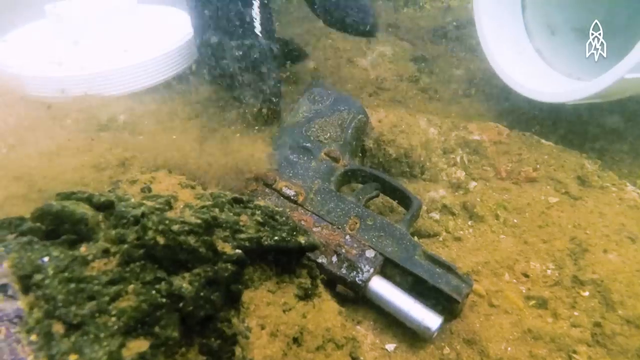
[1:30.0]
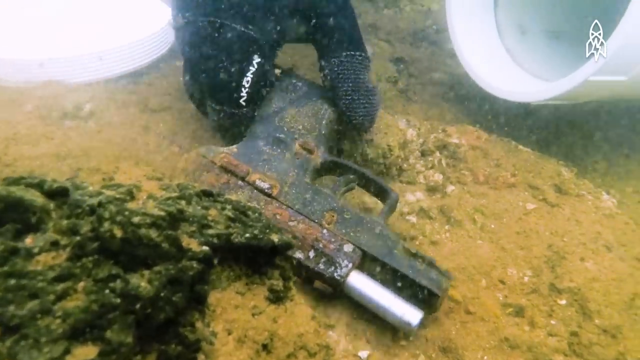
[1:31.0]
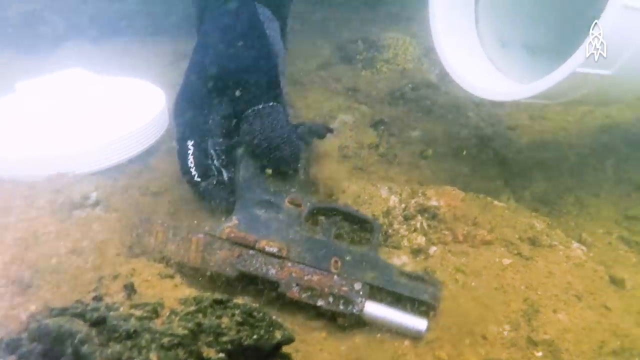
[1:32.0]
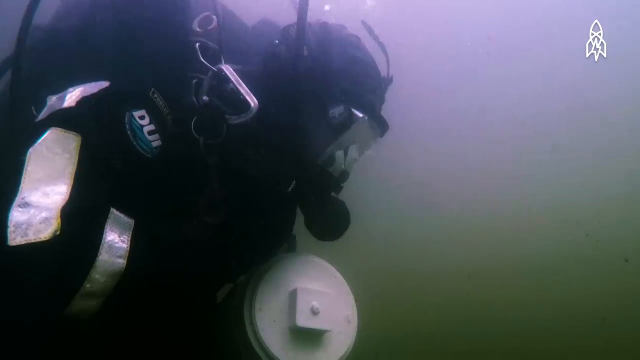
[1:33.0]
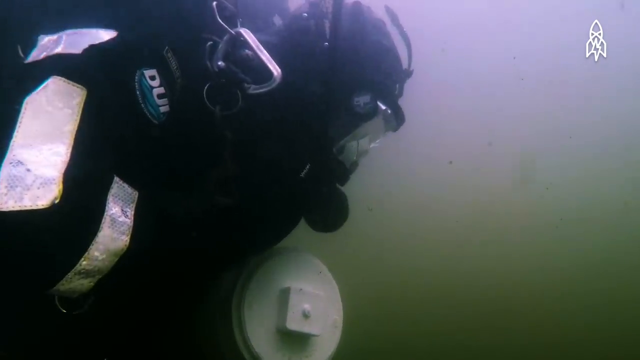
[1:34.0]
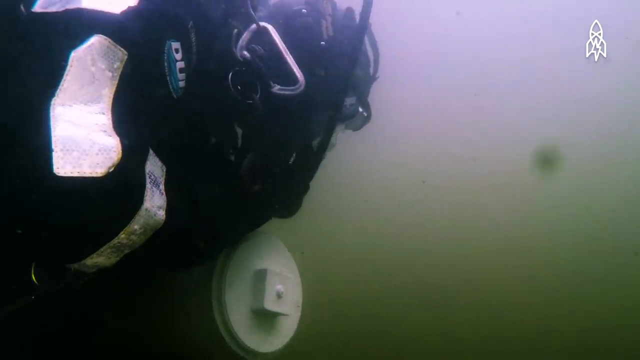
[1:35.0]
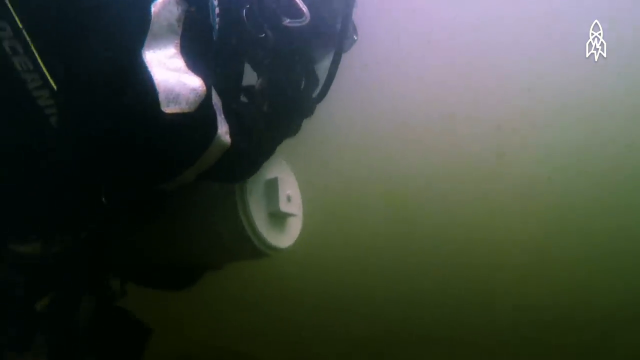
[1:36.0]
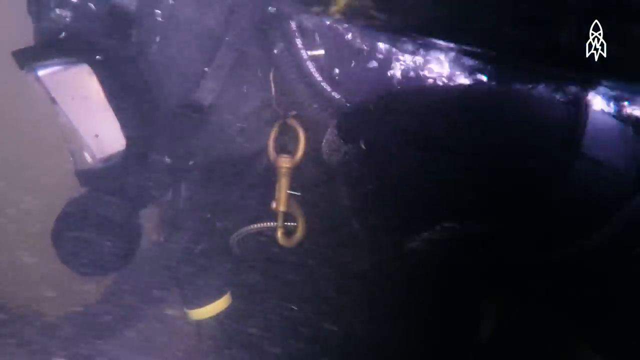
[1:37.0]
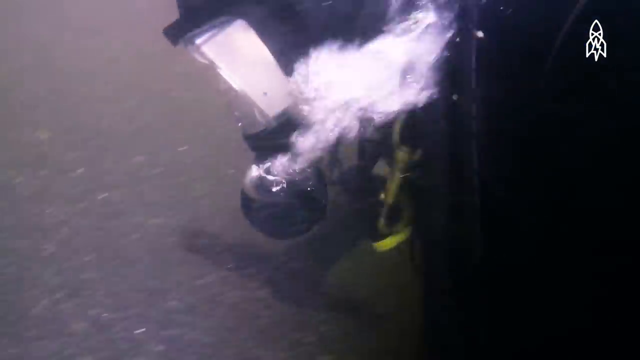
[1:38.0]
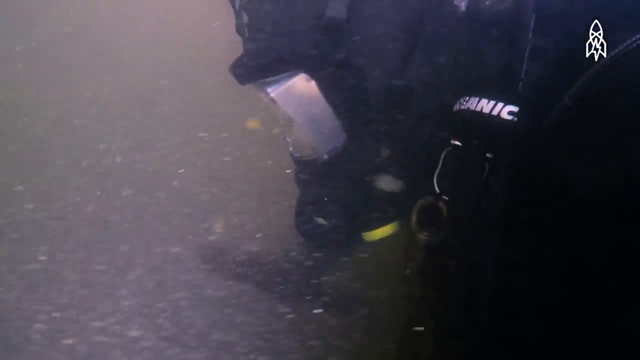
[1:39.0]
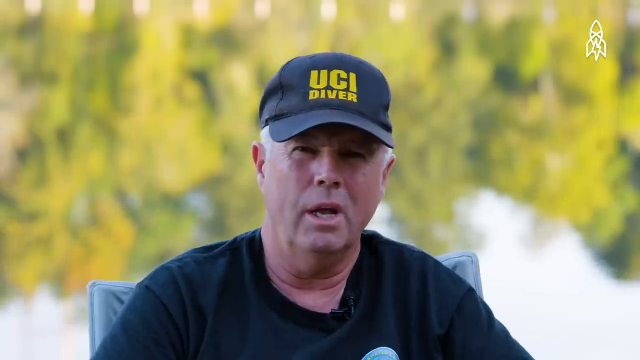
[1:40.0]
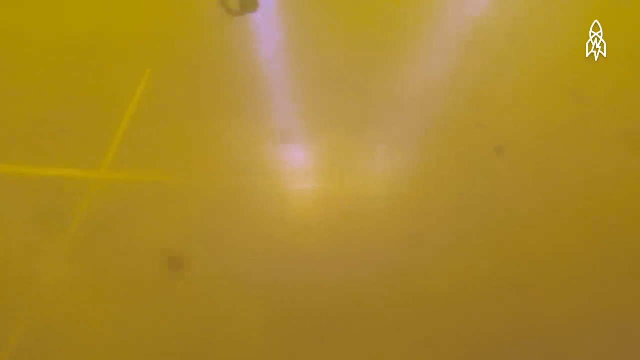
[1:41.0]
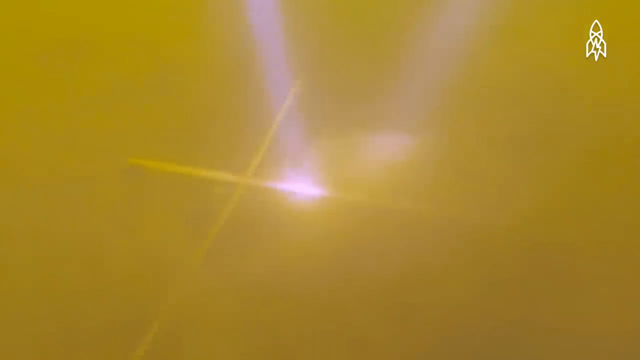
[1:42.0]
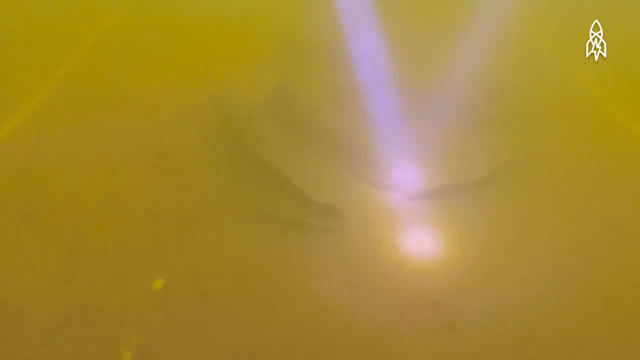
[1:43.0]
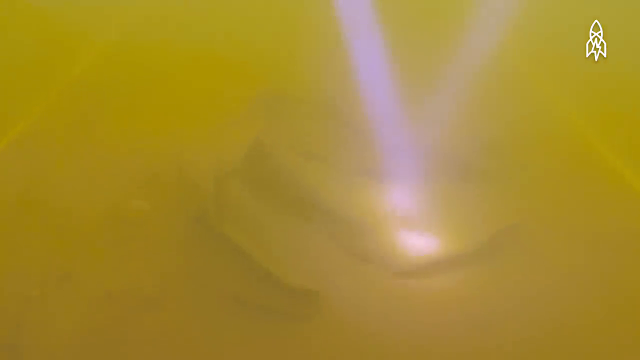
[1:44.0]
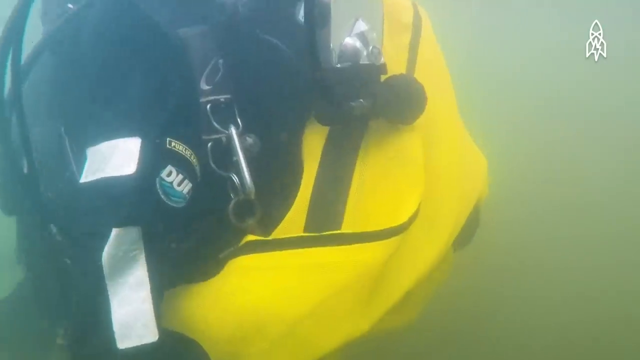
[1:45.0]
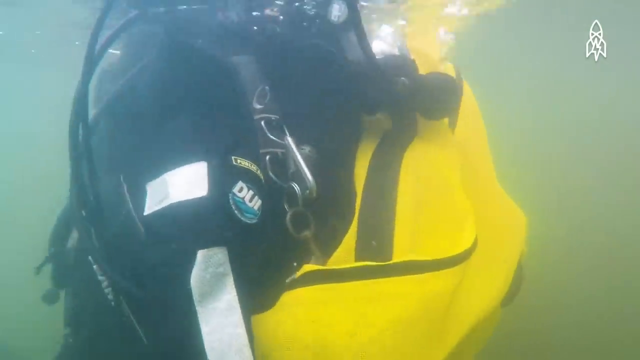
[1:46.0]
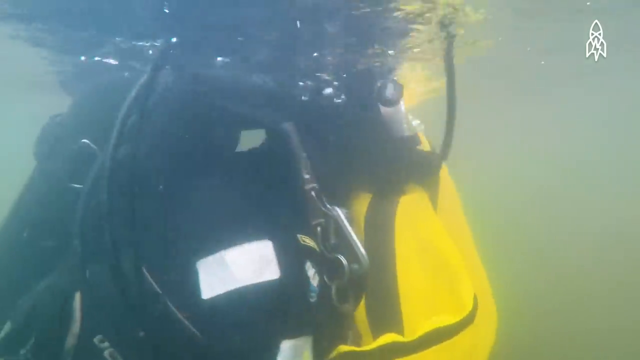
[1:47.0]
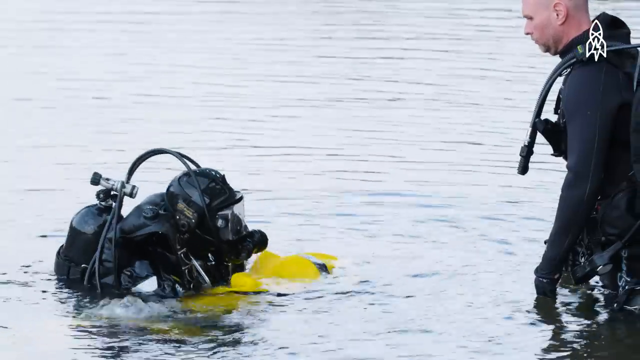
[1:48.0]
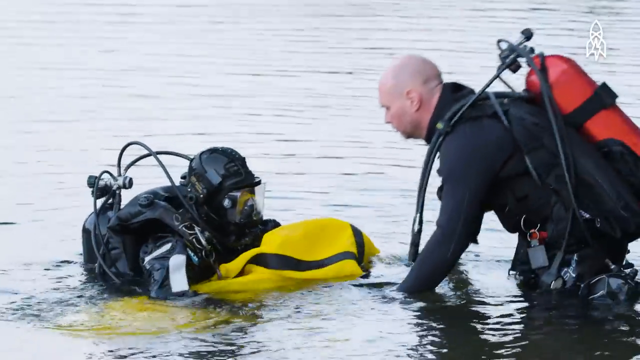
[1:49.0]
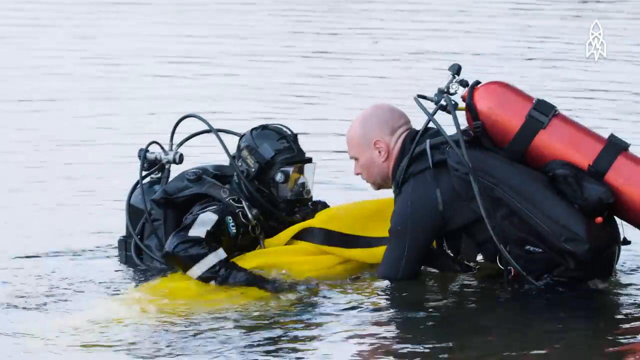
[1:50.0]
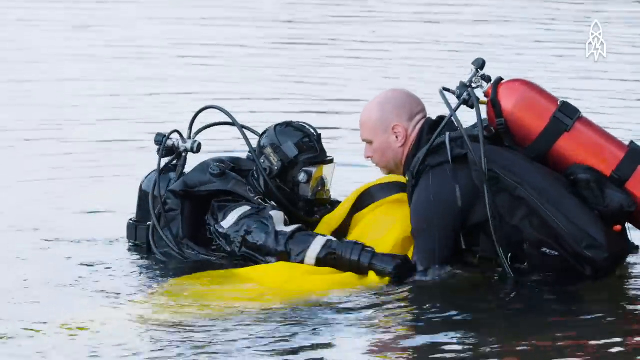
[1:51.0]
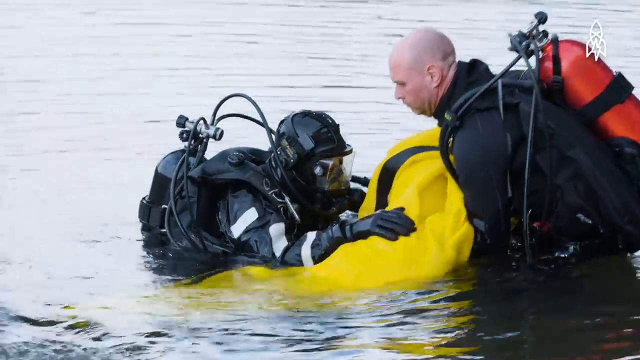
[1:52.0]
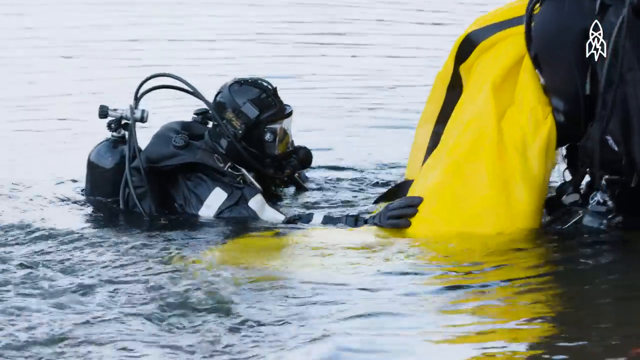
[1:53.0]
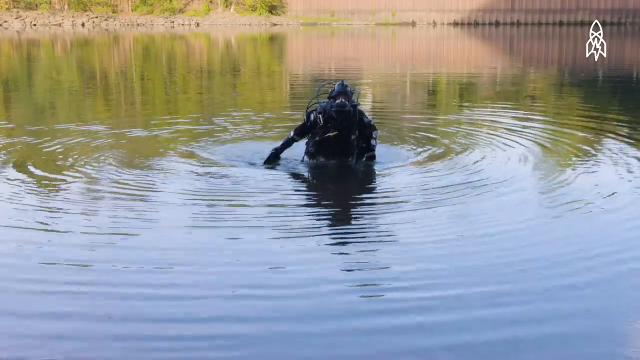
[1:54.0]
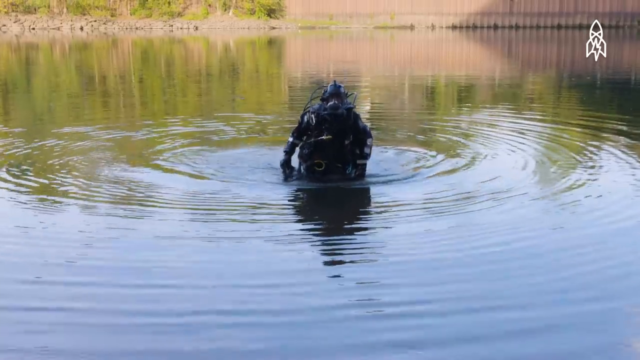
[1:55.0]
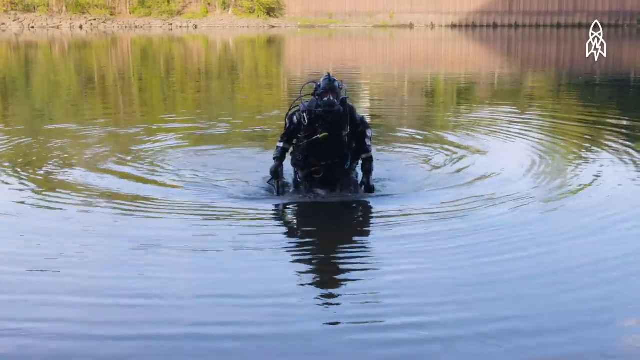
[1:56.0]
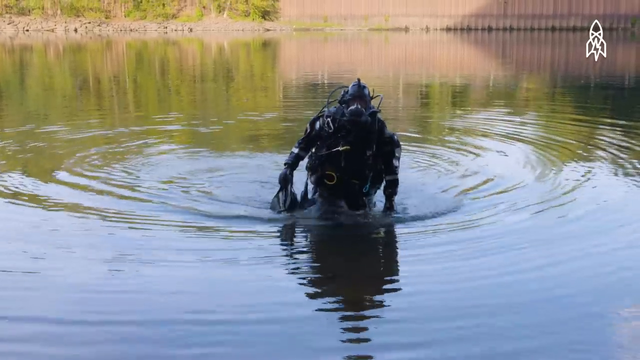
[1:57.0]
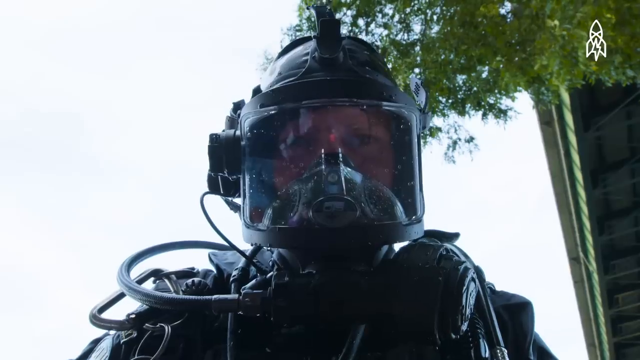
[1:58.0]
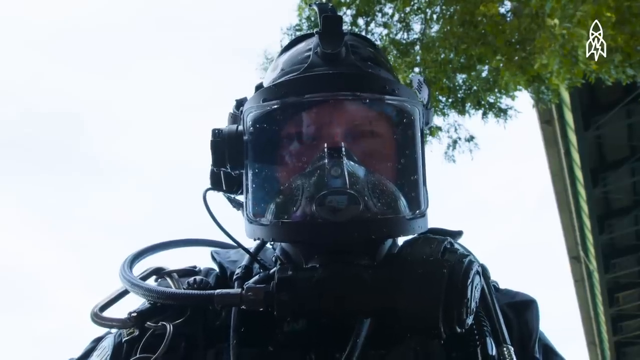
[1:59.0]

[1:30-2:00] A gun is found as further evidence; it looks like it was thrown underwater. The divers pick it up and put it in a container. The scene transitions to two divers; the first diver has found more evidence and puts it in a yellow plastic bag. The divers are then shown talking about what they found, and the UCI diver continues speaking.